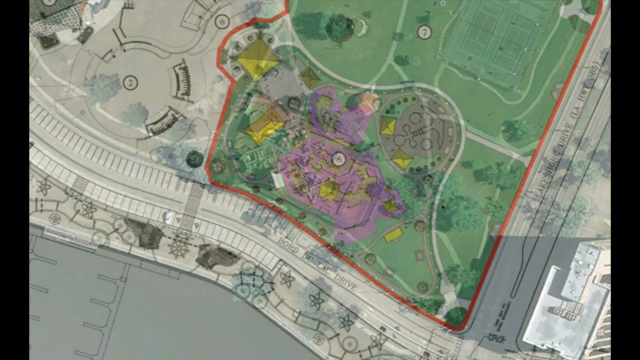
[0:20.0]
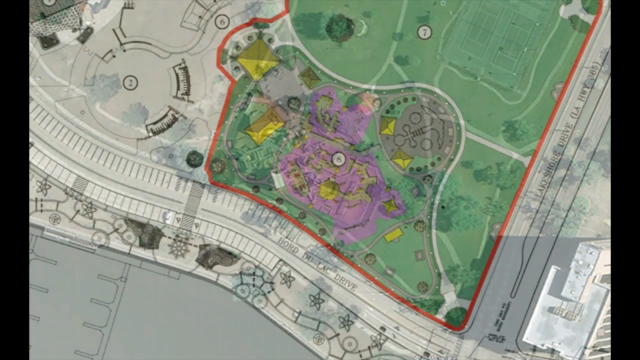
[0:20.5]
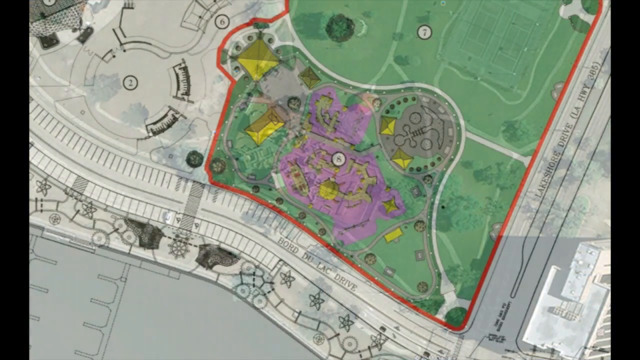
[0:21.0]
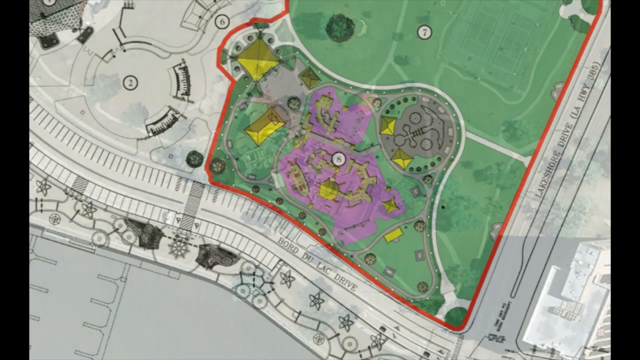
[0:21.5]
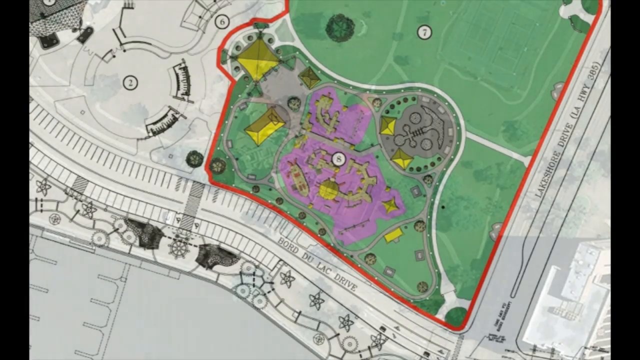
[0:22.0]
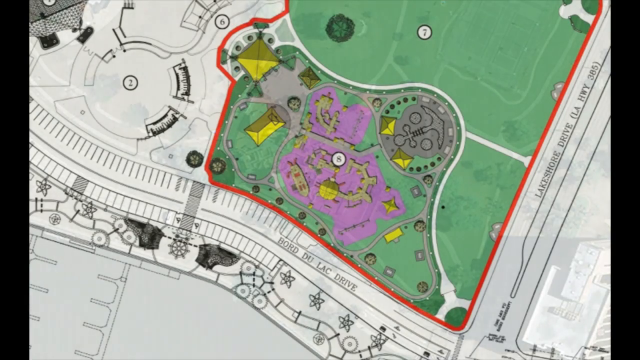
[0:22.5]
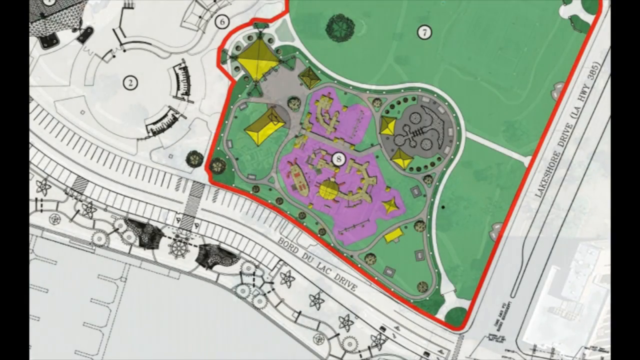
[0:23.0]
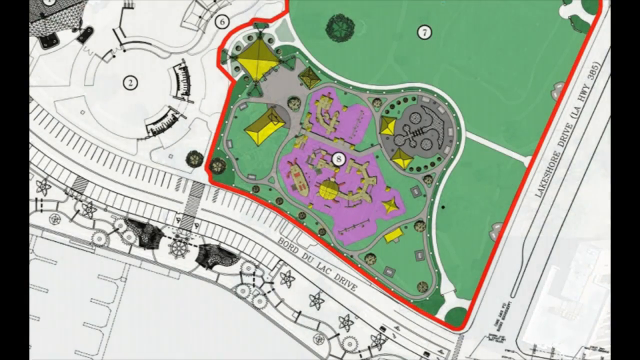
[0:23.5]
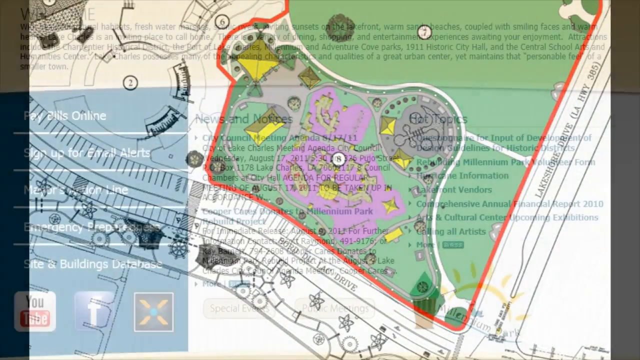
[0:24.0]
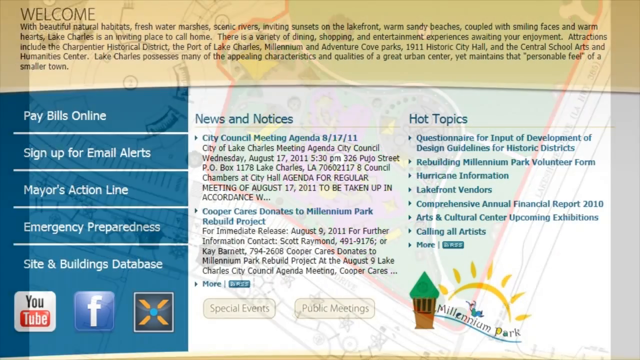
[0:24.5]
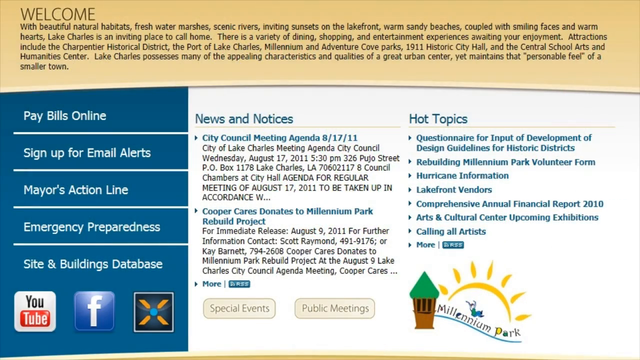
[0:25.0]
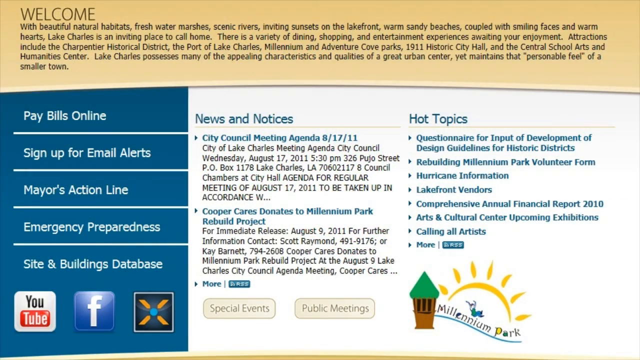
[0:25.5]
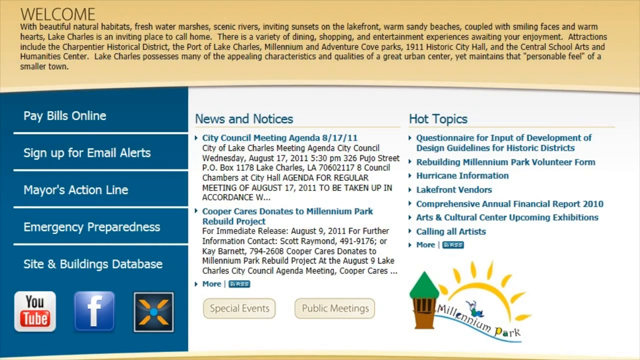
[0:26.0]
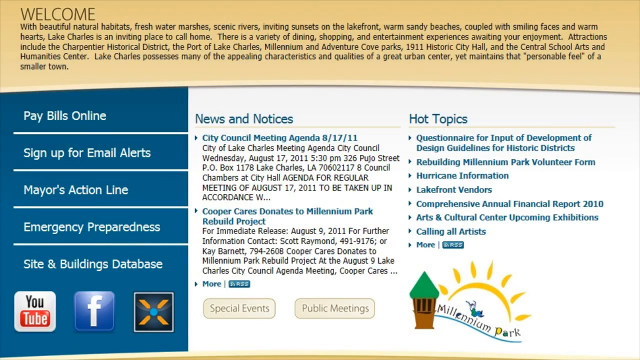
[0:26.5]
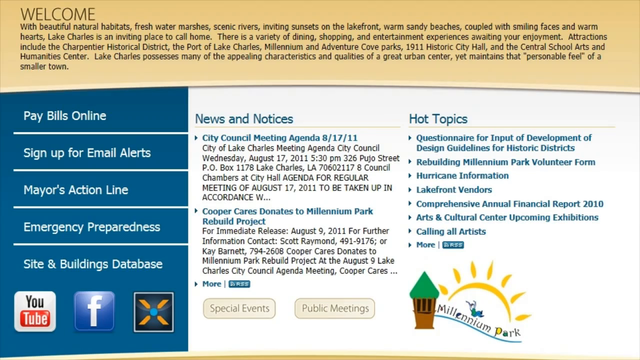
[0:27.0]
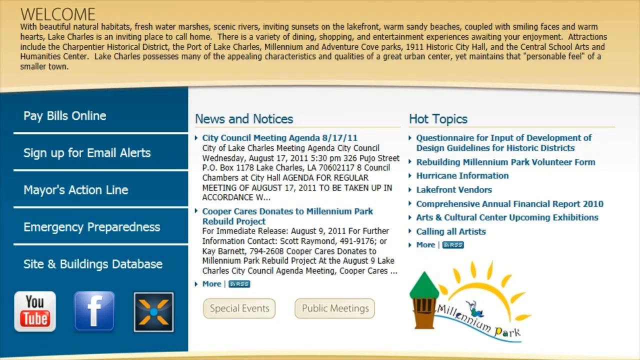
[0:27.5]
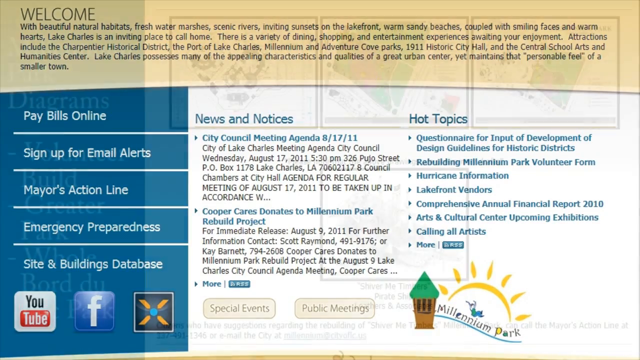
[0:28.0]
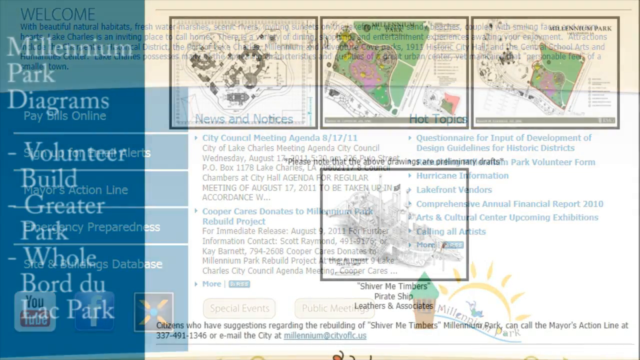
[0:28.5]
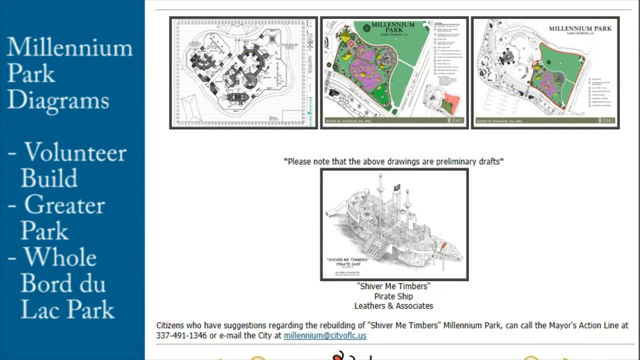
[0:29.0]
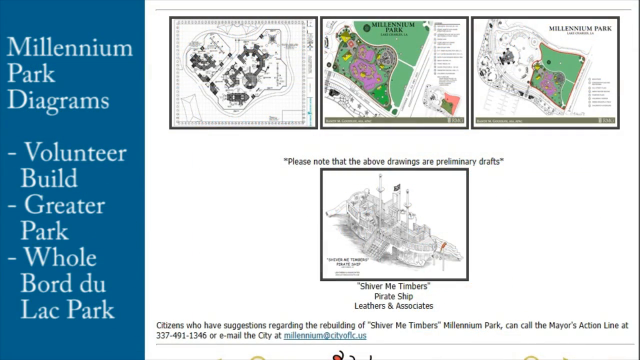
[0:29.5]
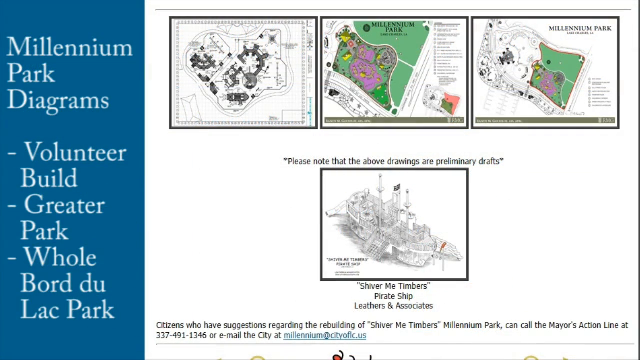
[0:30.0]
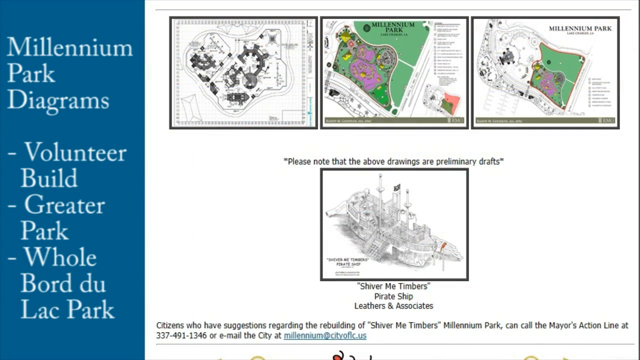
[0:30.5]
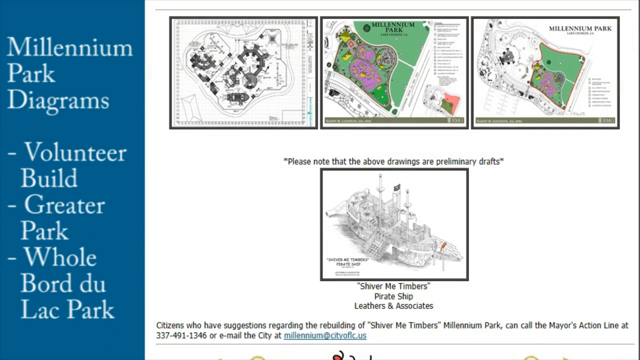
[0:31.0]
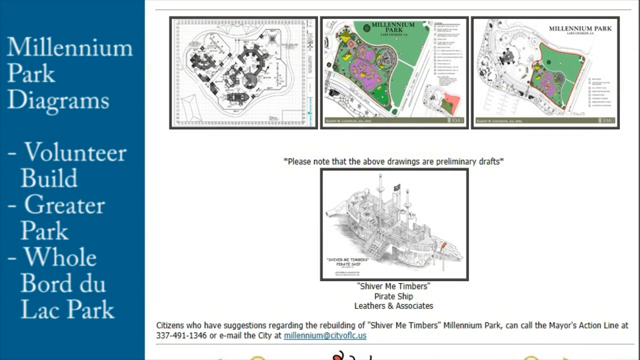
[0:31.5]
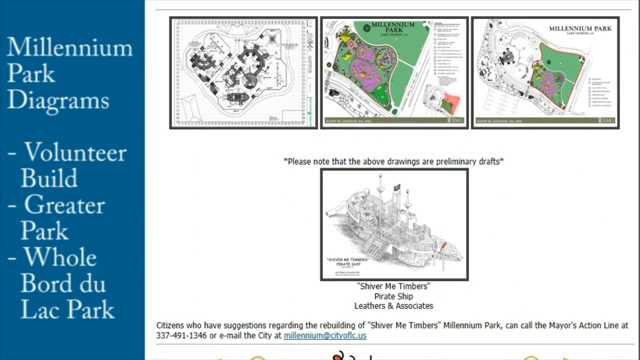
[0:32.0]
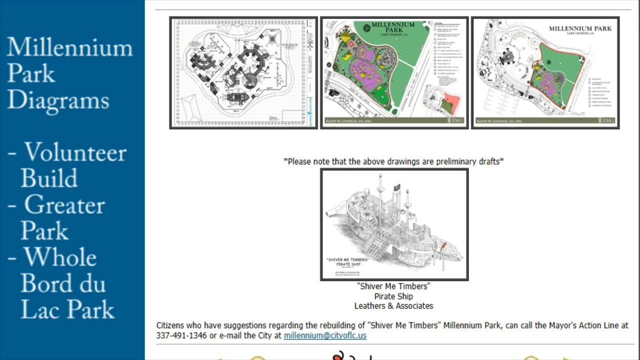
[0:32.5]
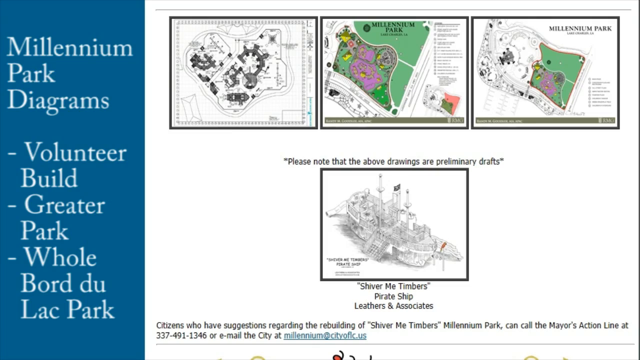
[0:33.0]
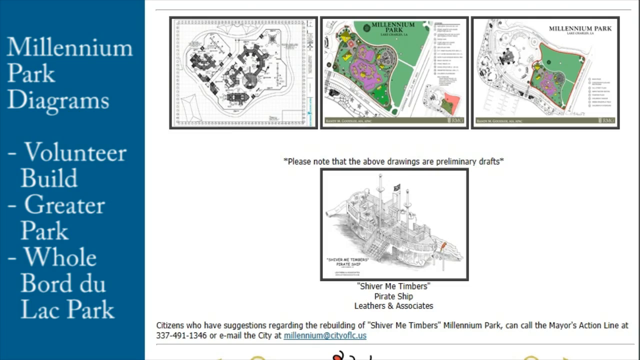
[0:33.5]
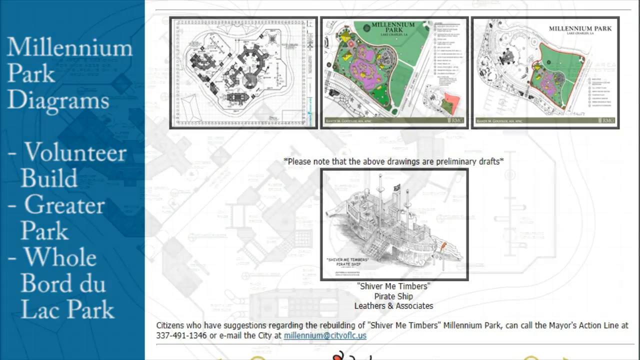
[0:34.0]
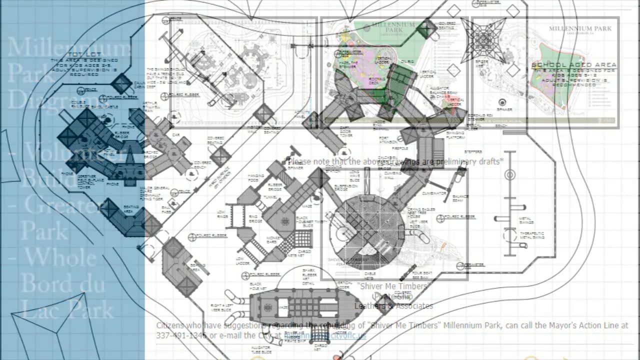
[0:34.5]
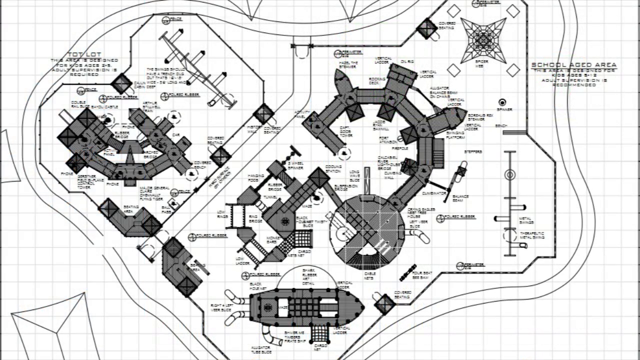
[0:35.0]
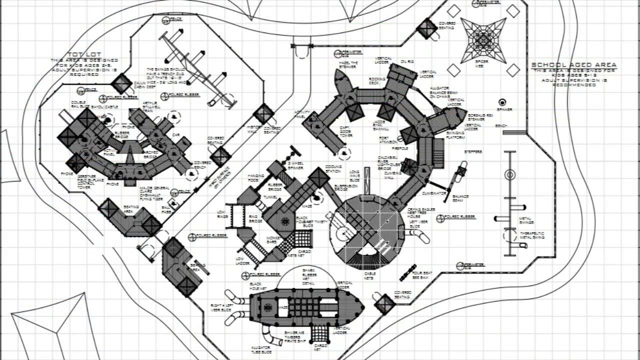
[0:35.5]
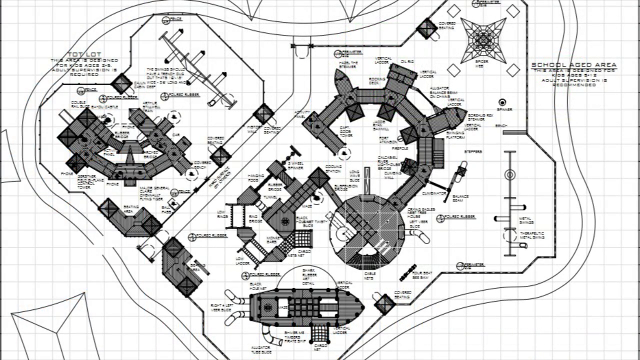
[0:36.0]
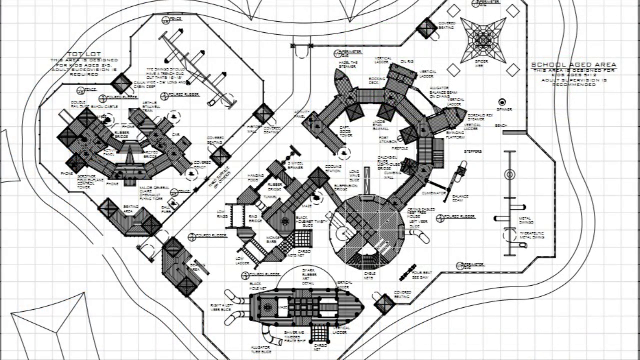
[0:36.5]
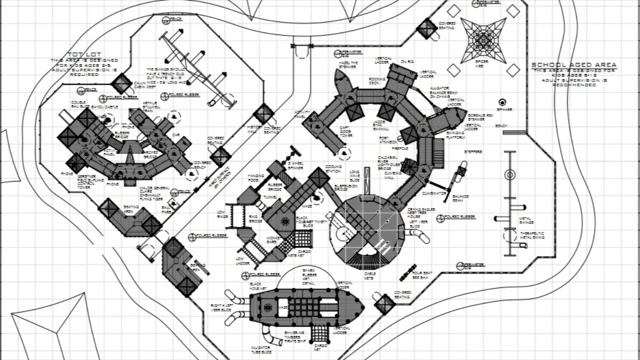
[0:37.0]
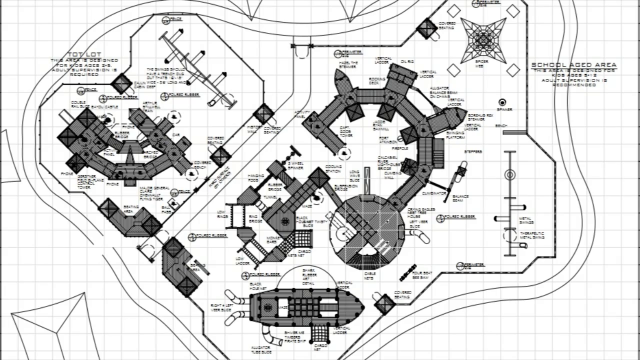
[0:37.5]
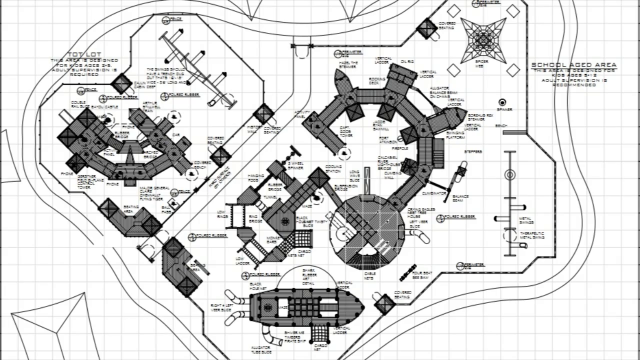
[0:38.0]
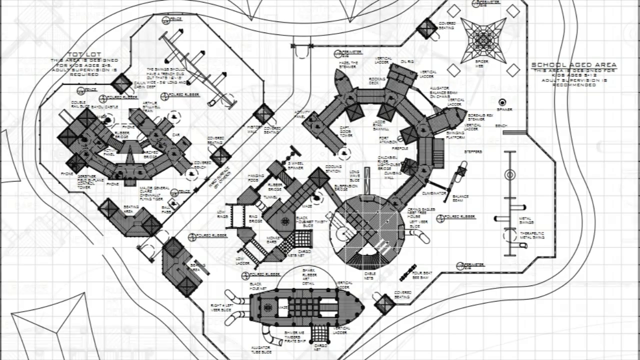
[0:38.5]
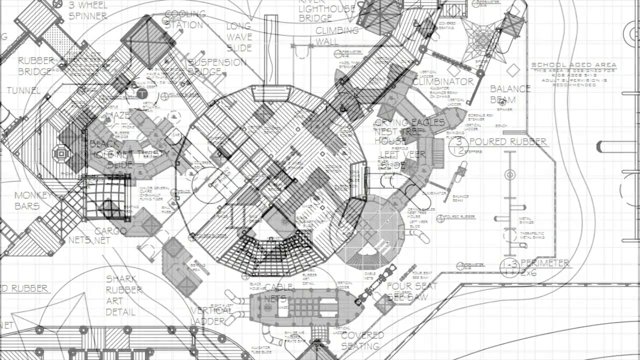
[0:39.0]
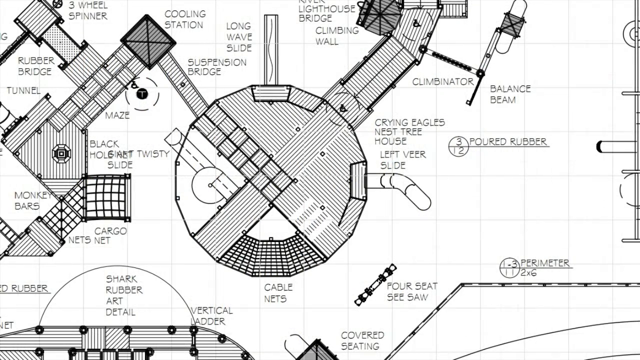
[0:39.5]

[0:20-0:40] A web page about the area is shown, including a painting in which the area appears as a very small town. A list of items is displayed, including "News and notice", "city council meeting agenda", "hurricane information link", "Comprehensive Annual Financial Report 2010" and "Arts & Culture Center Upcoming Exhibition Calling All Artists".